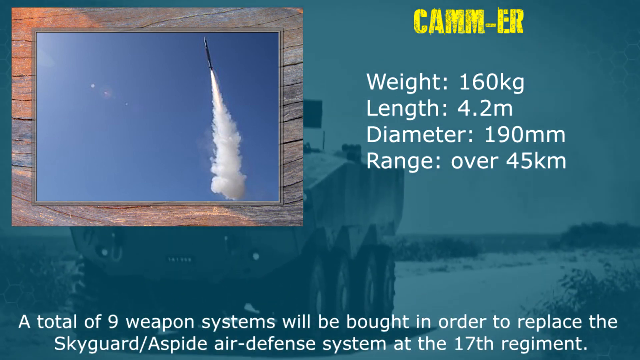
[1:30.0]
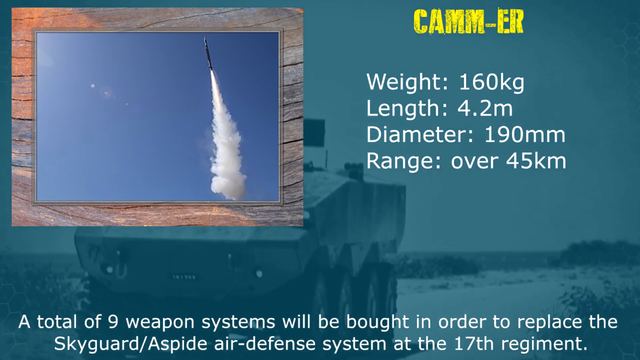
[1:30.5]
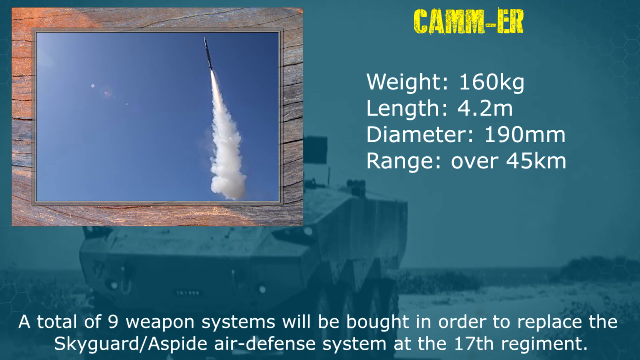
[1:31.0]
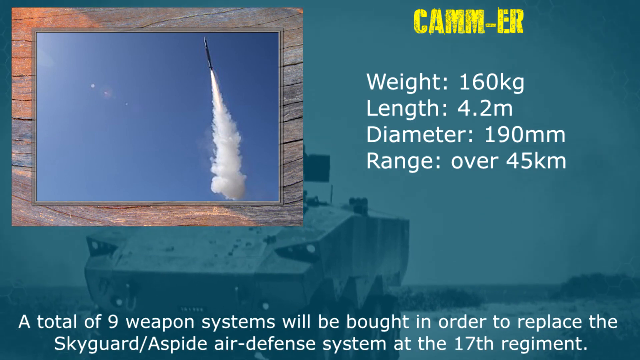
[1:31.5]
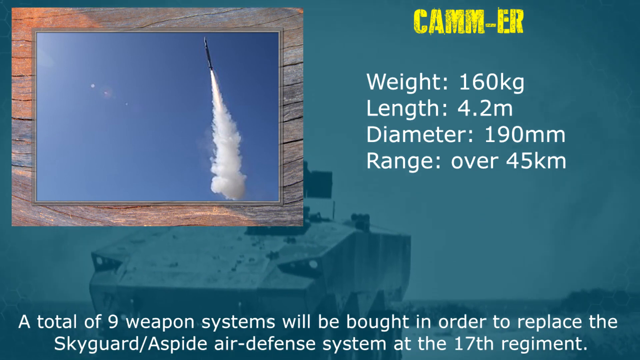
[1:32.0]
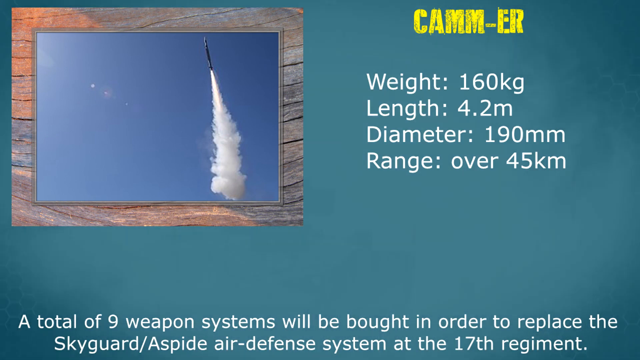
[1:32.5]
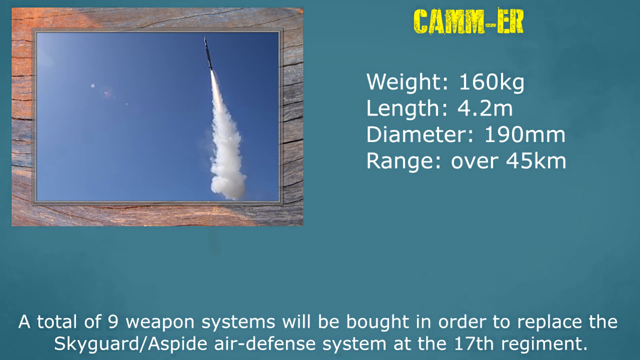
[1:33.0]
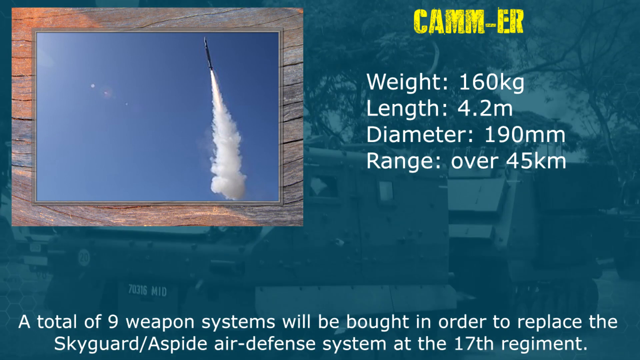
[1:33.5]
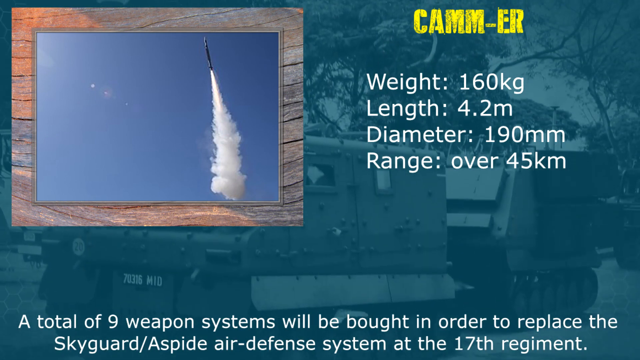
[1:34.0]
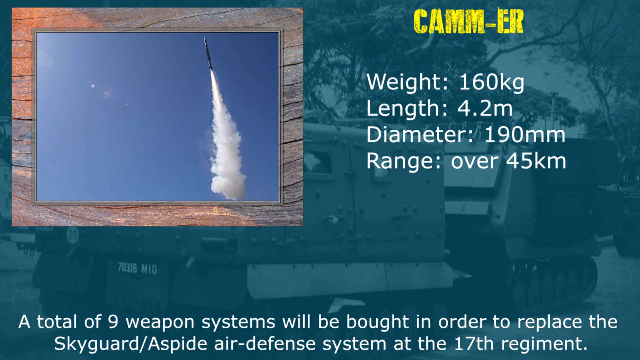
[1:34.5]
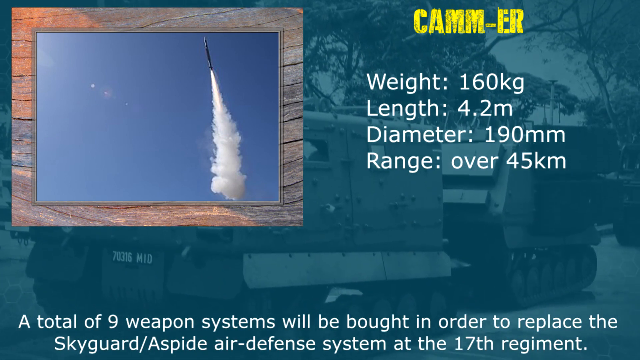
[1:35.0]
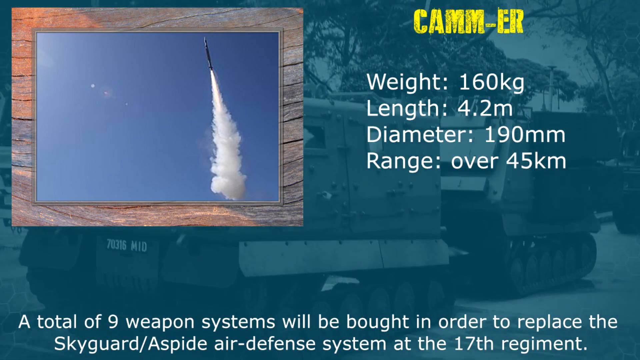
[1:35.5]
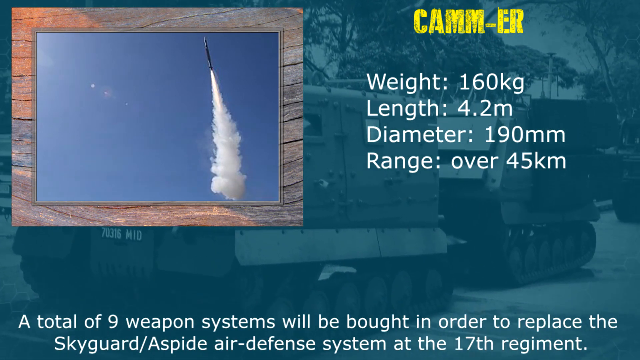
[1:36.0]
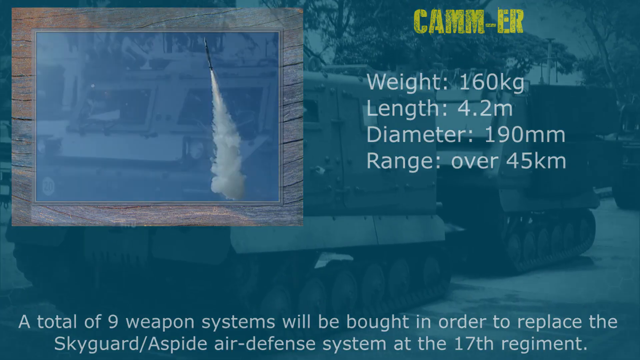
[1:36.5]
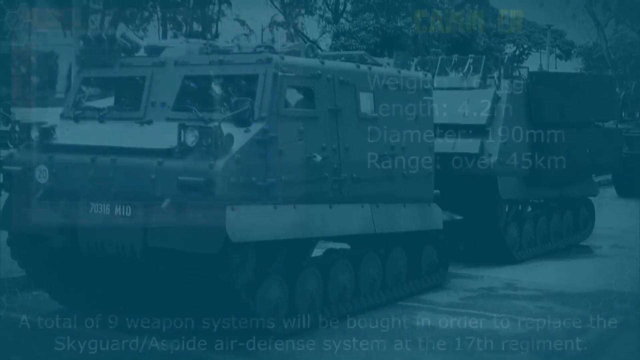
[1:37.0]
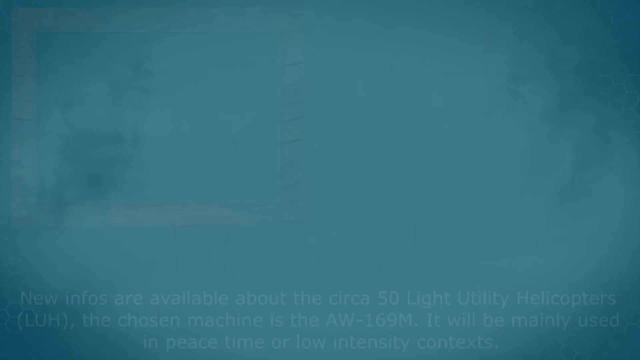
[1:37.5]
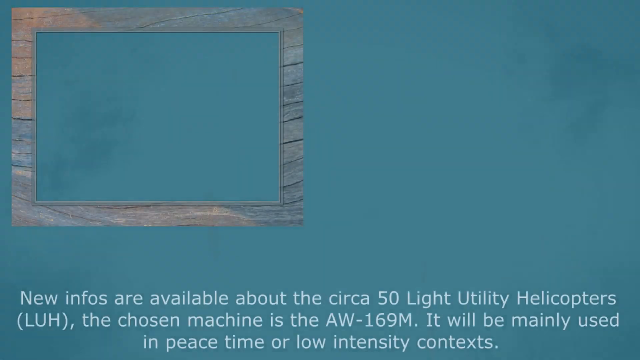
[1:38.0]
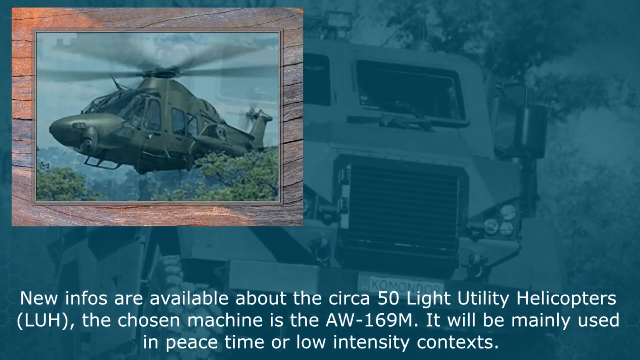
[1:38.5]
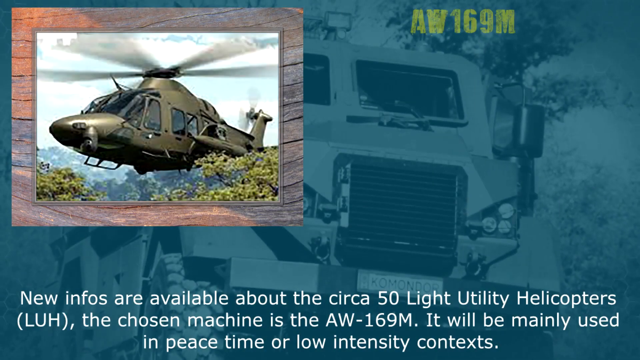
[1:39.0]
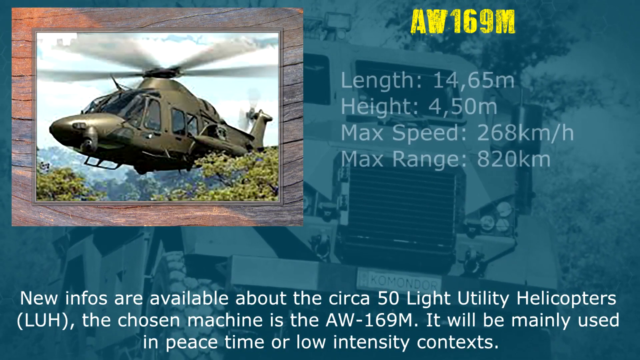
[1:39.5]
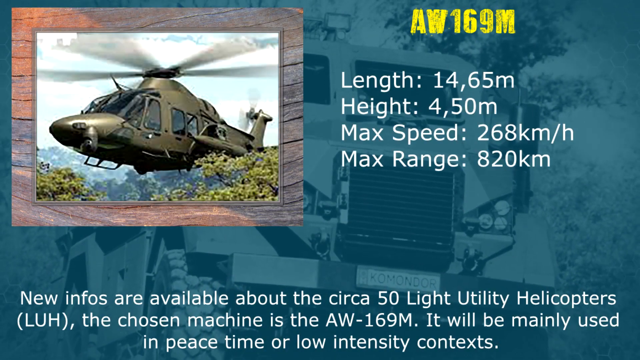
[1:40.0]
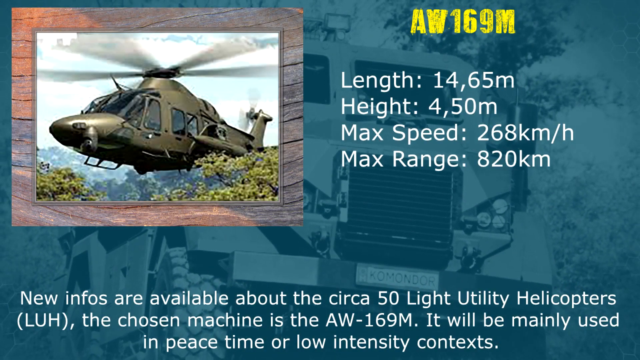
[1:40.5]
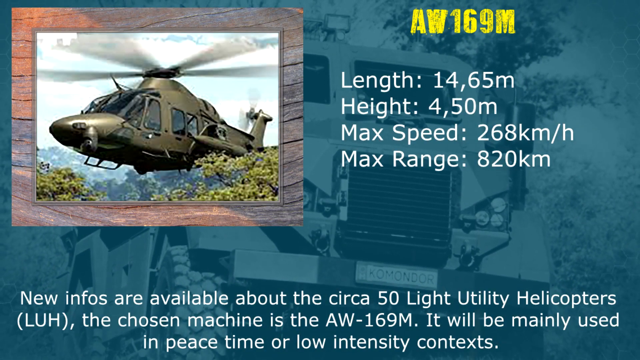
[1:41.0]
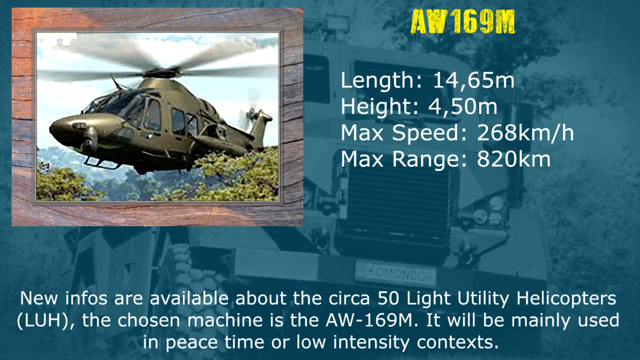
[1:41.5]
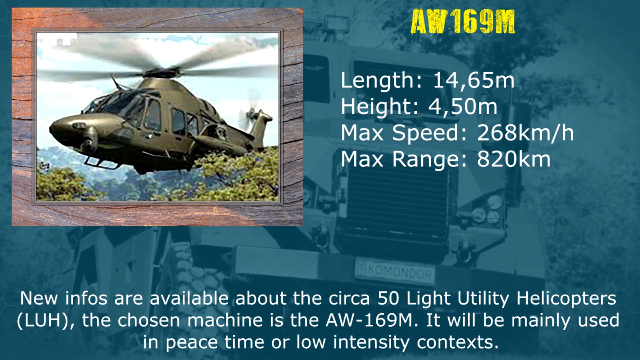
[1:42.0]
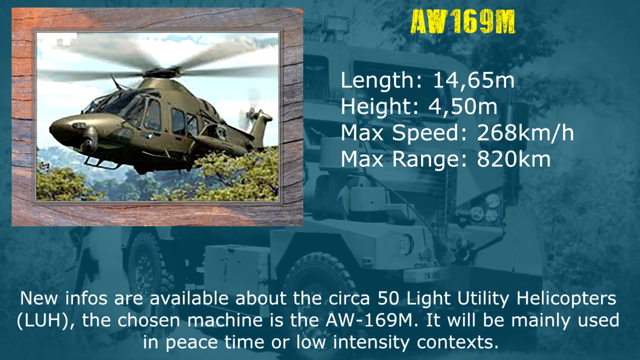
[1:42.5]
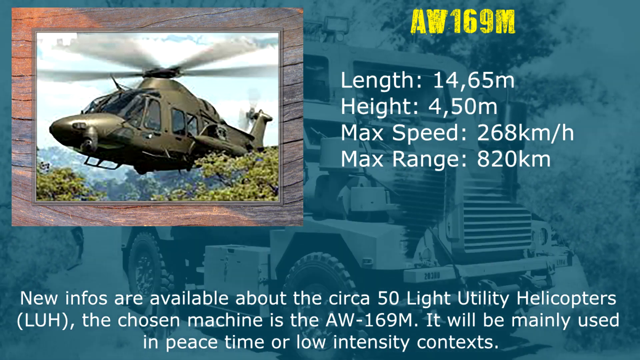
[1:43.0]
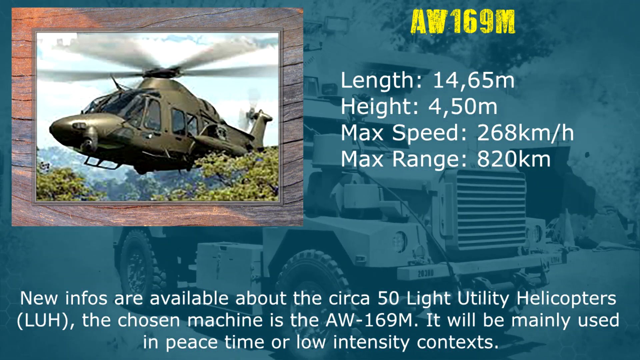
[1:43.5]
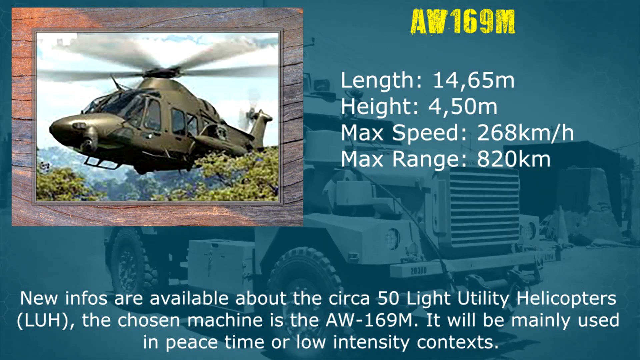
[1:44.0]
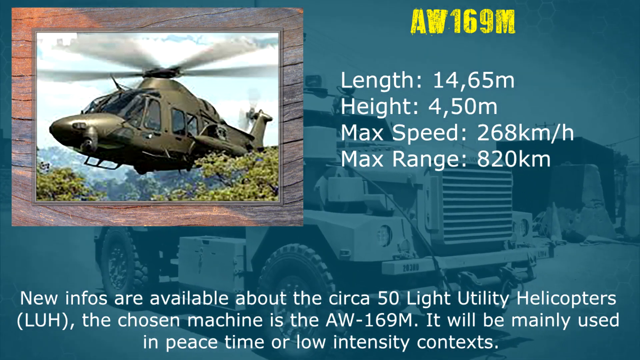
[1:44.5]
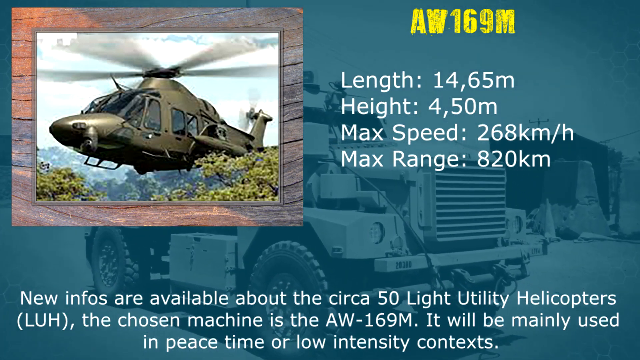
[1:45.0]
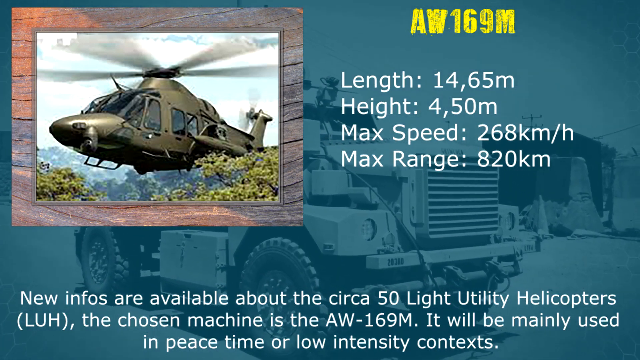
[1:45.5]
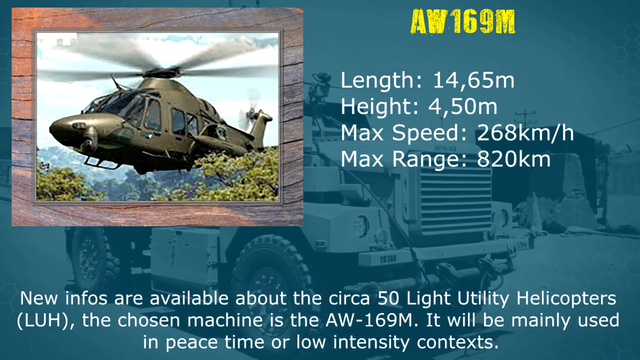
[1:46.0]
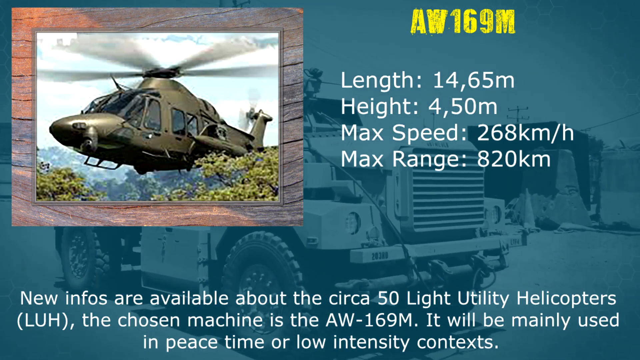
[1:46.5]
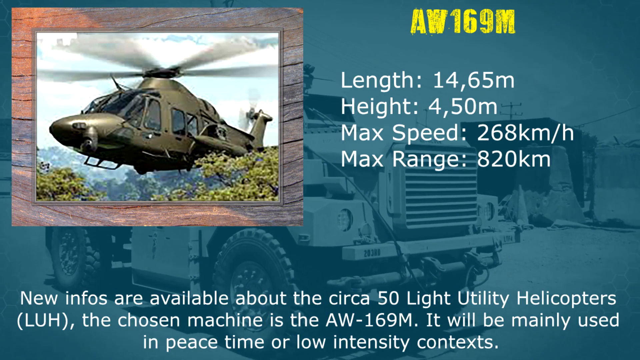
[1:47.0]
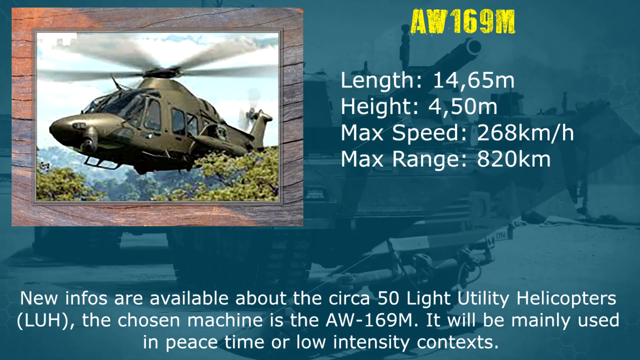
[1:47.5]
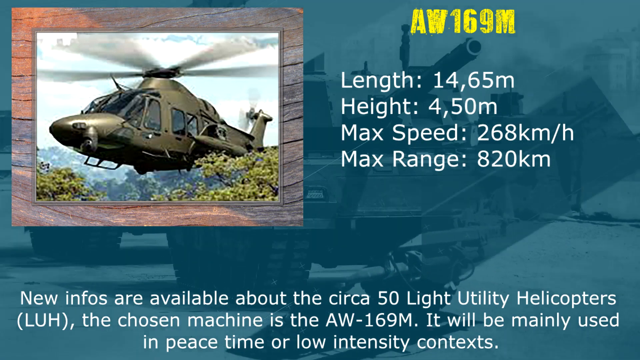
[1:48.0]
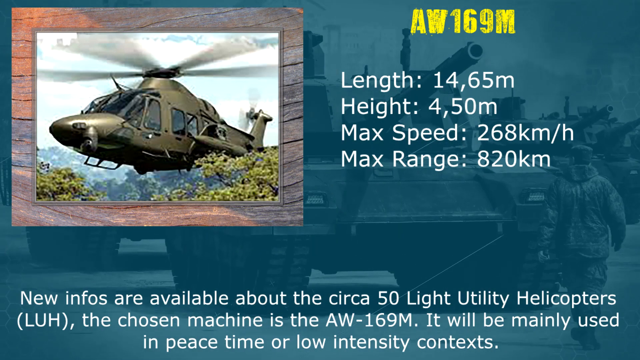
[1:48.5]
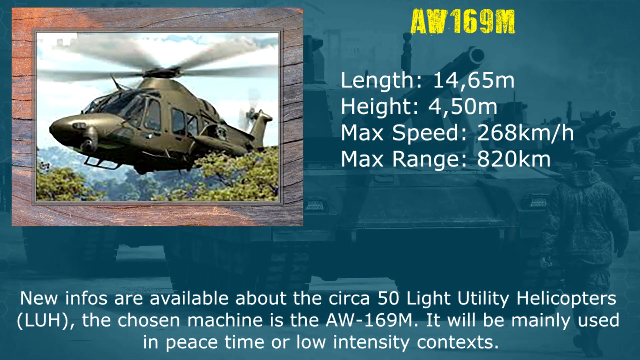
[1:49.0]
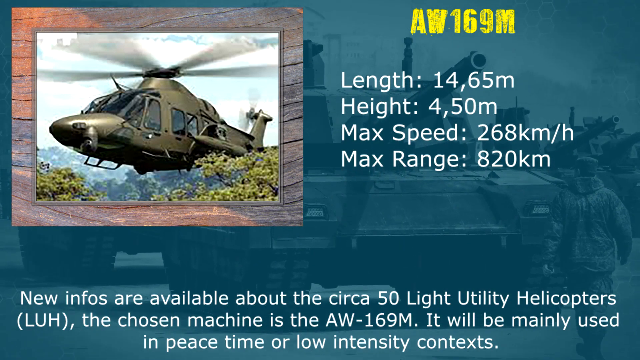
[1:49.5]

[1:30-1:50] A dark blue background changes through different types of military equipment. In a square box in the upper left corner is an image of what appears to be a rocket that has taken off, with white smoke billowing out of its bottom. On the right side, "CAMM-ER" is written in yellow, with weight, length, diameter and range listed below it and items beside each. White writing is also at the bottom, and the background slowly shifts through more images of army equipment and tanks. The square box in the upper left then switches to a helicopter, the top says "AW169M", and length, height, max speed and max range are listed with items beside them.